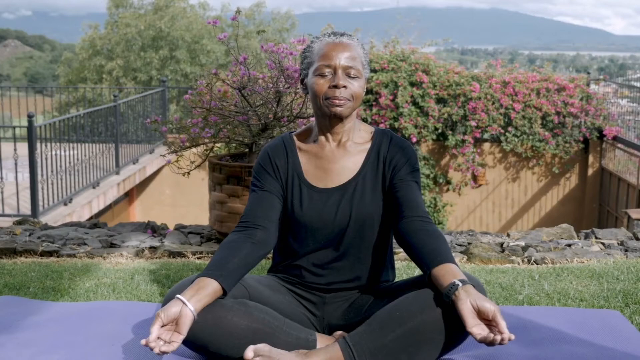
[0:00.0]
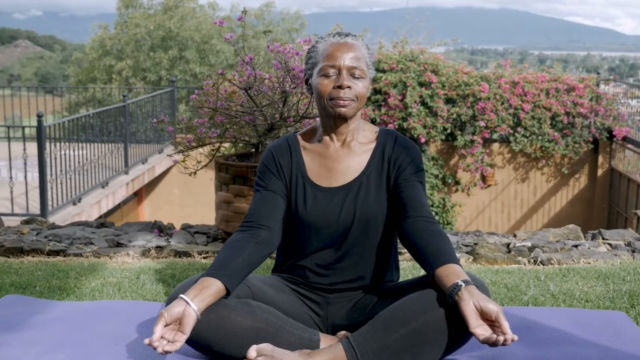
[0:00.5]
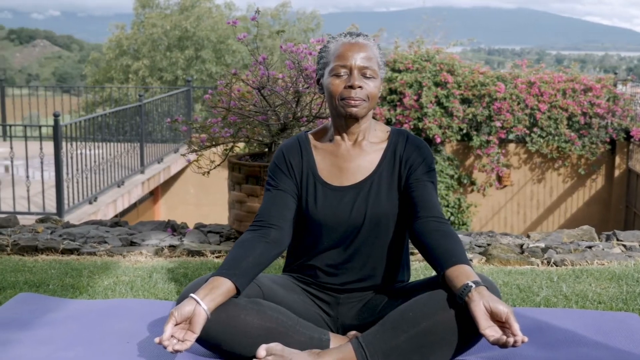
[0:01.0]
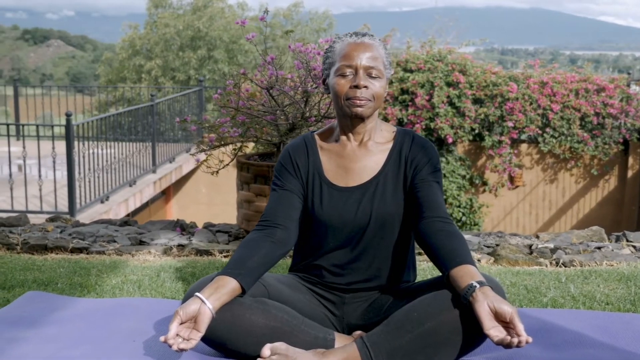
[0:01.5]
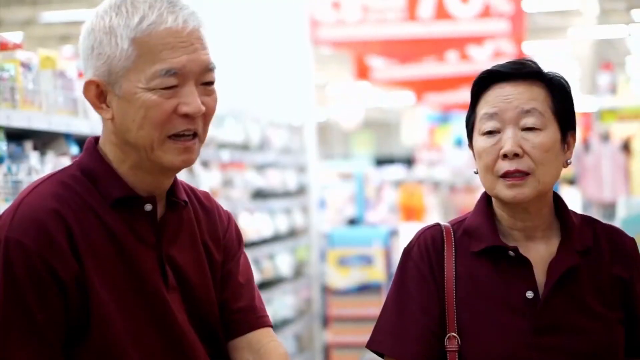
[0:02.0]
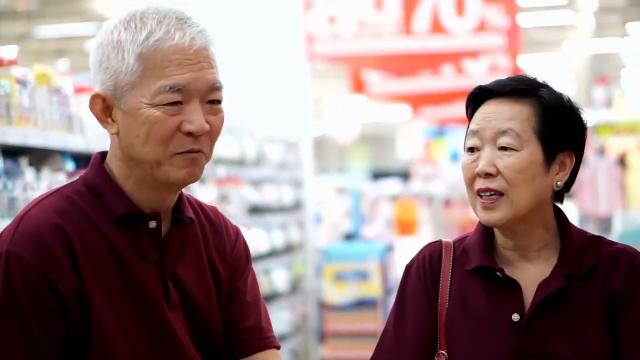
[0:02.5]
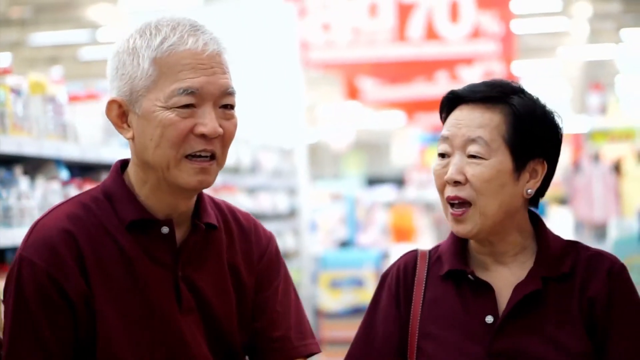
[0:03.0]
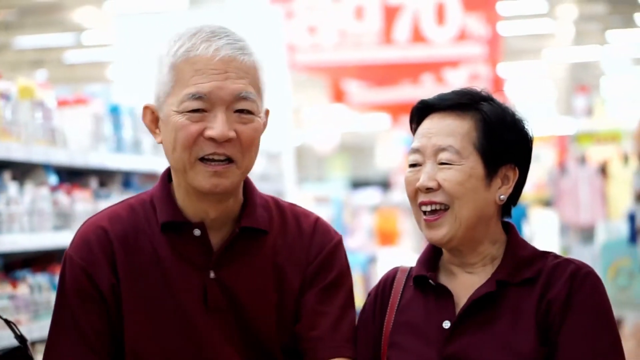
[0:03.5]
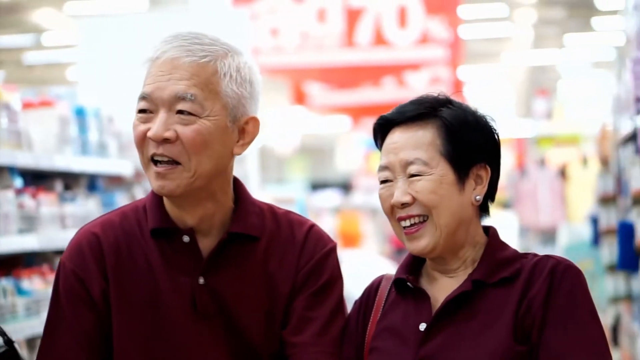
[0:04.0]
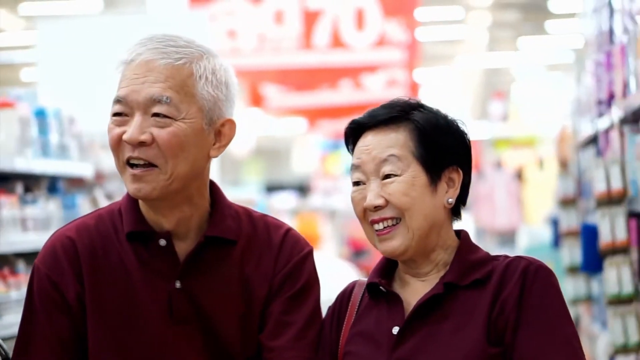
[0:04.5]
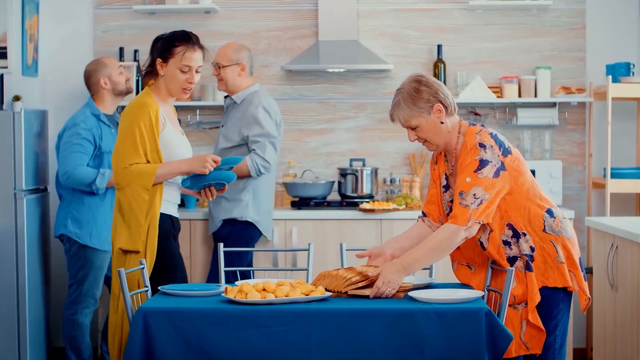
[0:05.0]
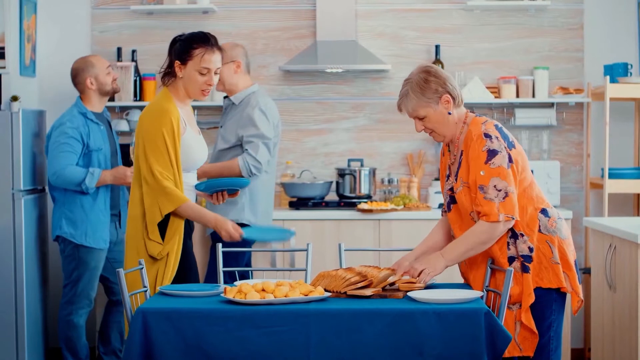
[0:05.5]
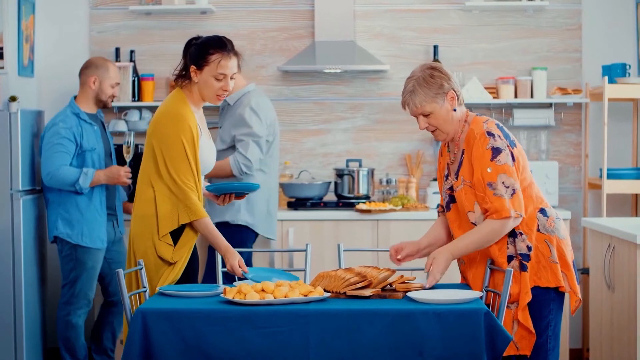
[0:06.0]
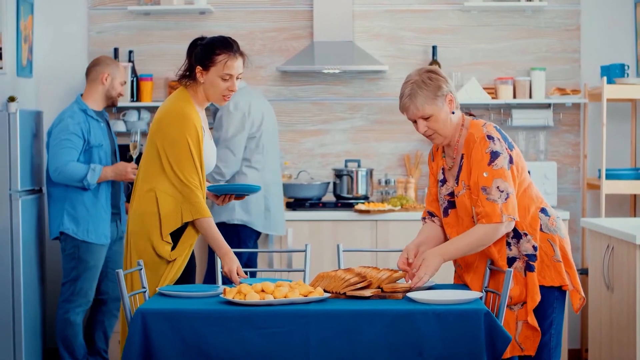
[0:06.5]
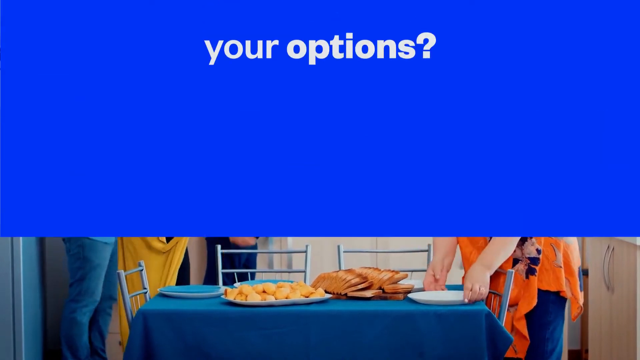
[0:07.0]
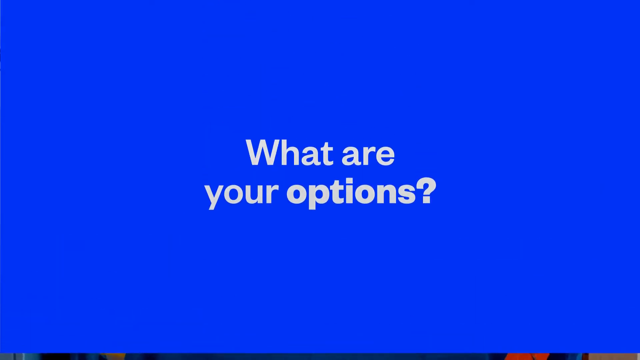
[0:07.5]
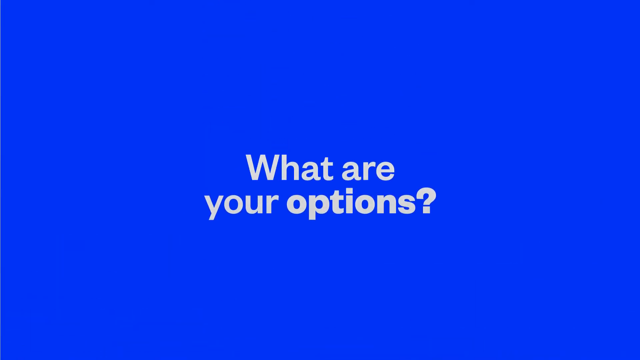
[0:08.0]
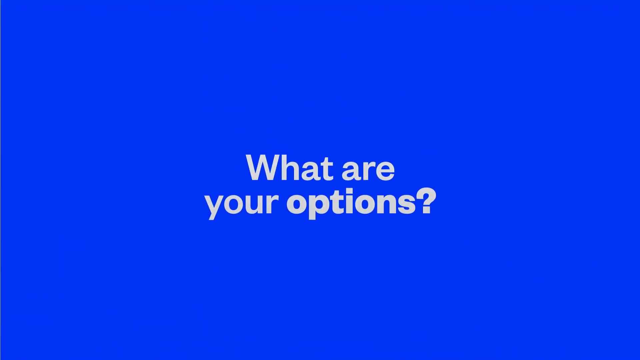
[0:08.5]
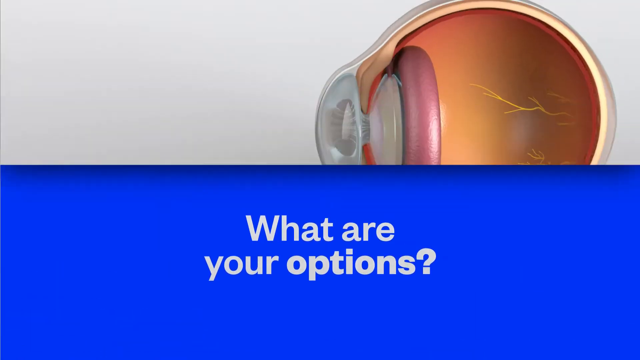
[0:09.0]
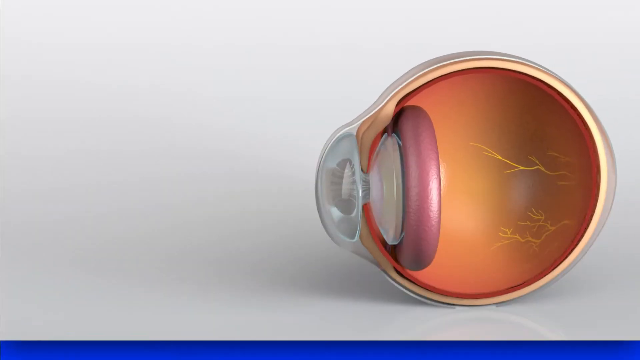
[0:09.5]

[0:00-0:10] A woman with a darker skin tone, wearing a black scoop-neck long sleeve, meditates outside with her eyes closed, sitting on top of a purple yoga mat. The next shot shows two people in a grocery store, both wearing maroon polos, laughing and talking. Then four people, two men and two women, set up for dinner in a kitchen. A screen transitions in with a navy blue background and the text "what are your options?"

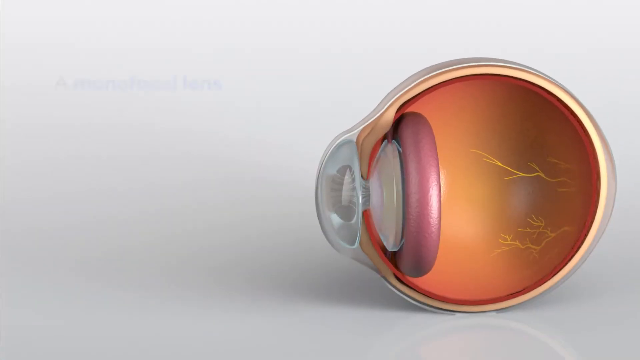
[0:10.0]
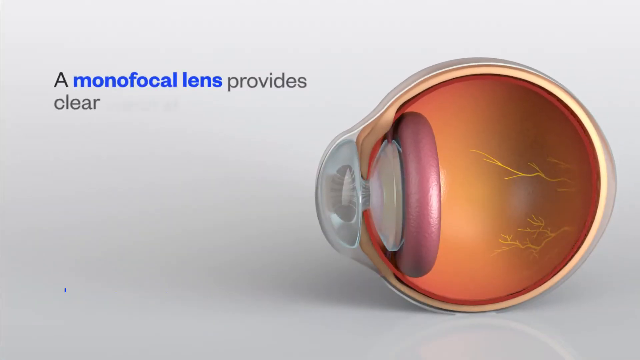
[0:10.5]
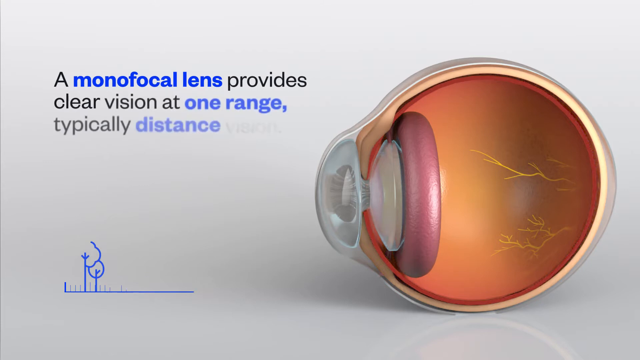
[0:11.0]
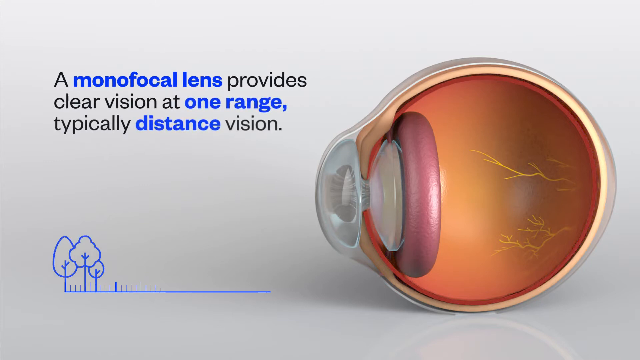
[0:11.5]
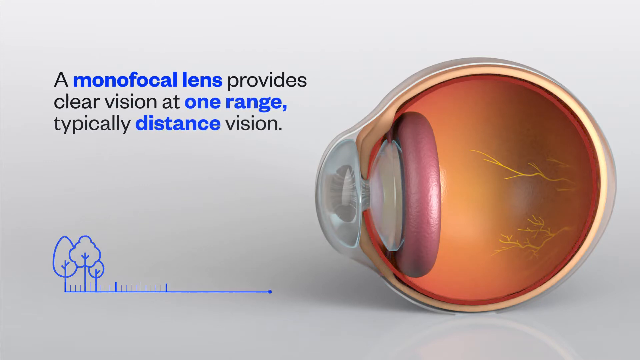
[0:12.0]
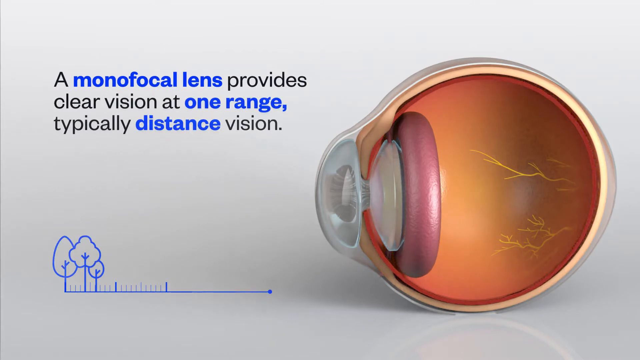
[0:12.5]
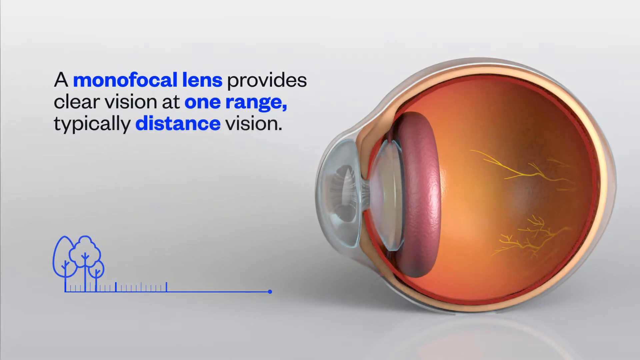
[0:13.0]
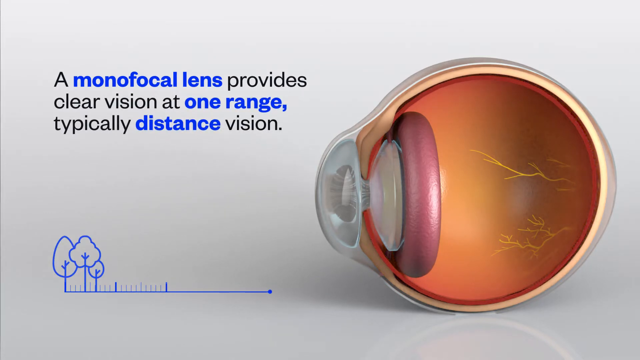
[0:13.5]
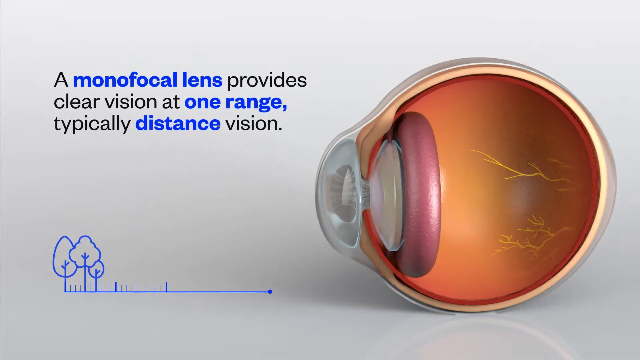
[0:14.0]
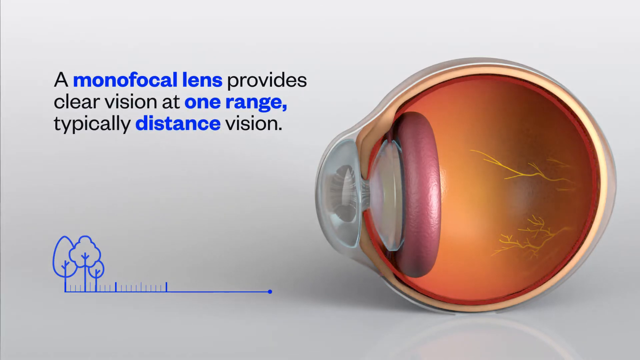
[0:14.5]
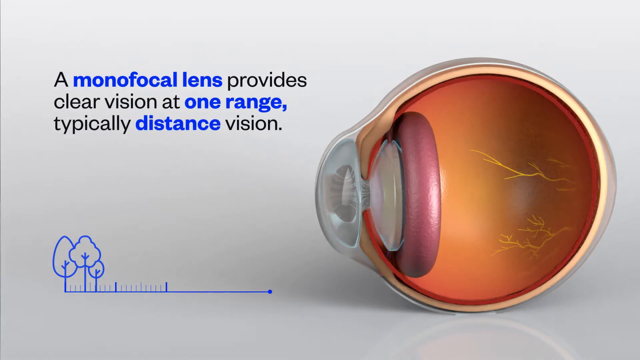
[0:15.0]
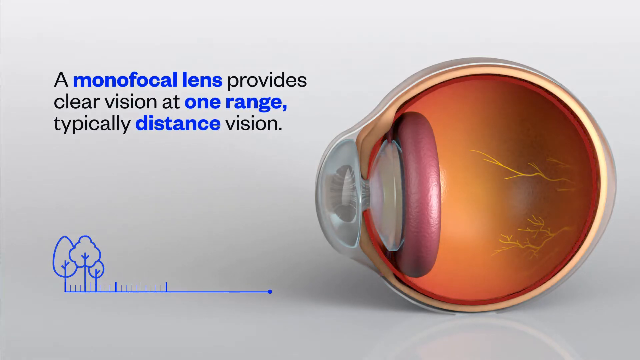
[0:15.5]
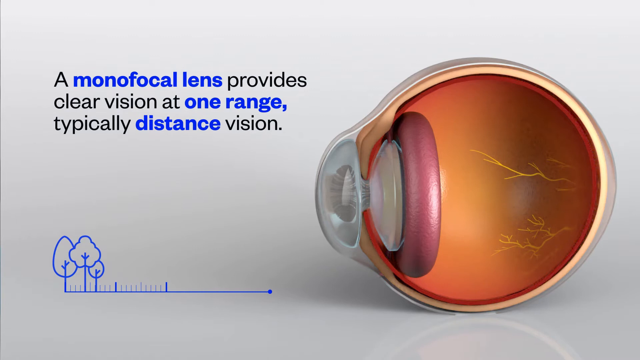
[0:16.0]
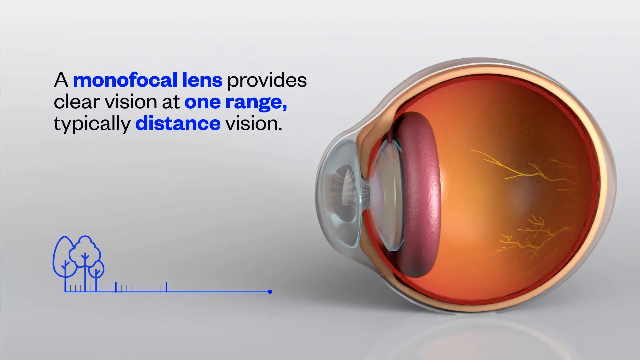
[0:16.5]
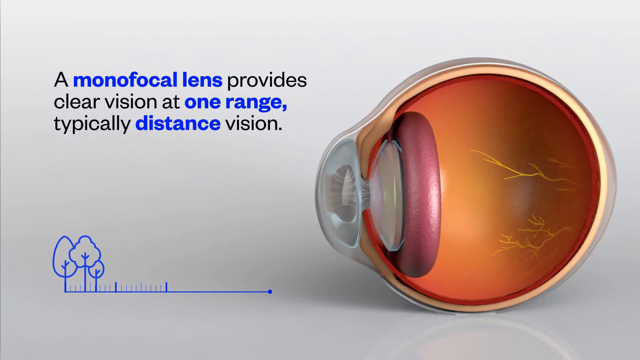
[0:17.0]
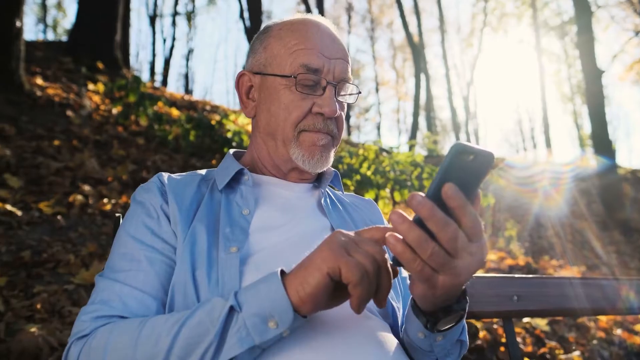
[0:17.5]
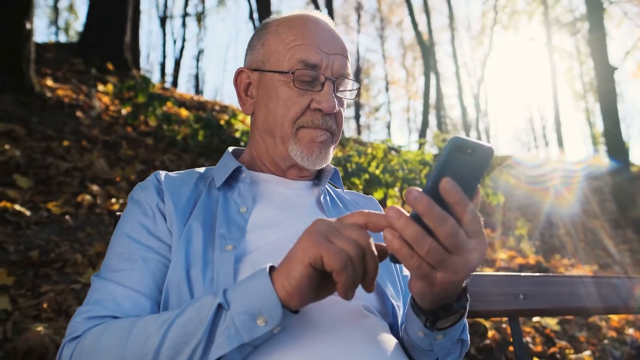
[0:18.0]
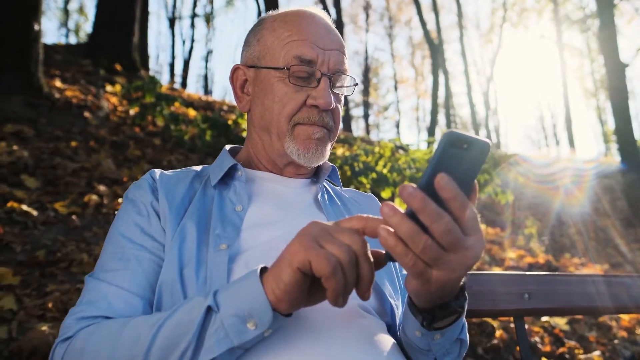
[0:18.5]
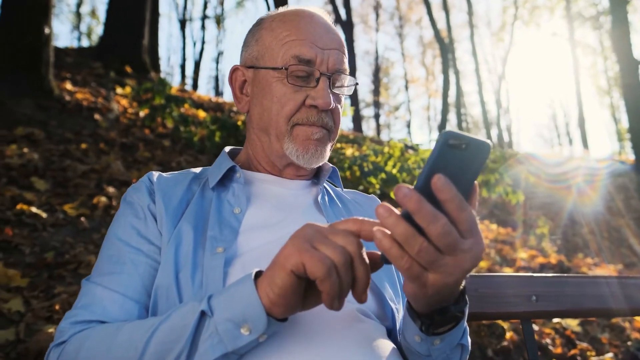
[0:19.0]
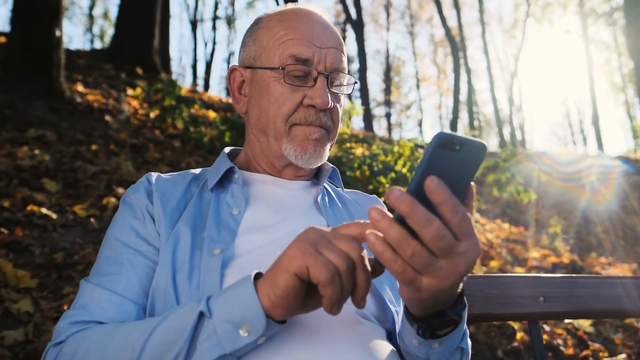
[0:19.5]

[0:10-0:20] An animation shows, on the right side, an eyeball that appears to reveal its internal parts and layers; on the left, text reads "a monofocal lens provides clear vision at one range typically distance vision". Next, an older man with not much hair texts on his phone, holding it in his left hand and typing with the index finger of his right hand. He wears small-frame glasses and a white t-shirt under a blue long-sleeve button-up. He is sitting outside on a bench, and behind him is a hill with tall trees along it.